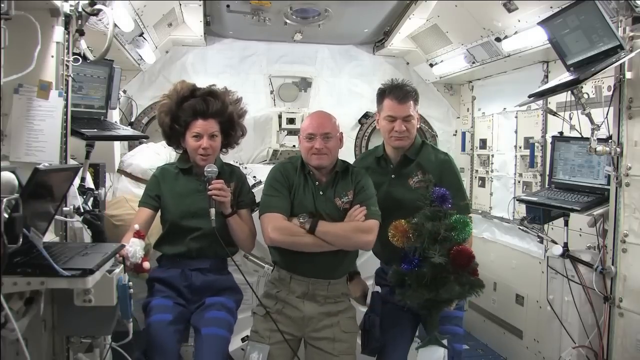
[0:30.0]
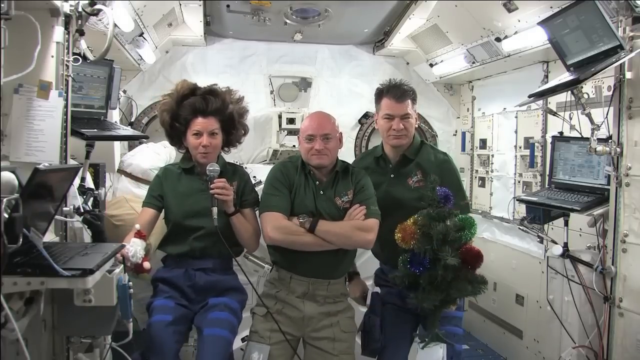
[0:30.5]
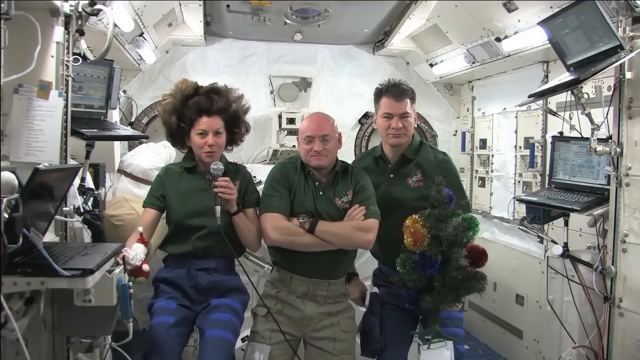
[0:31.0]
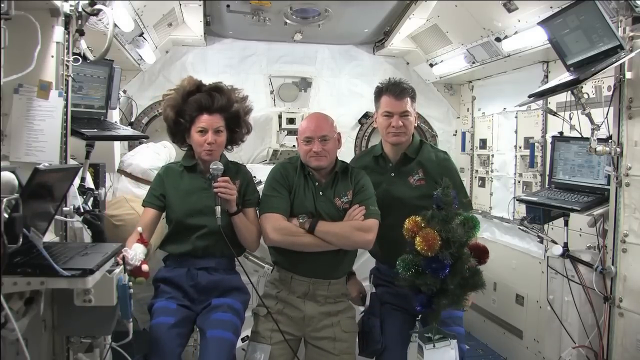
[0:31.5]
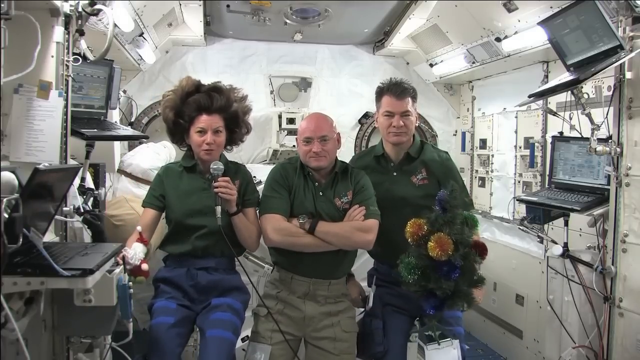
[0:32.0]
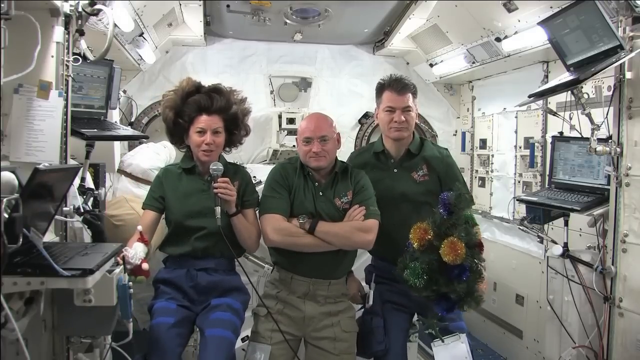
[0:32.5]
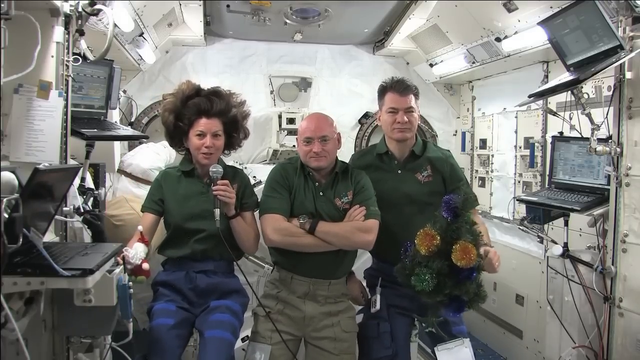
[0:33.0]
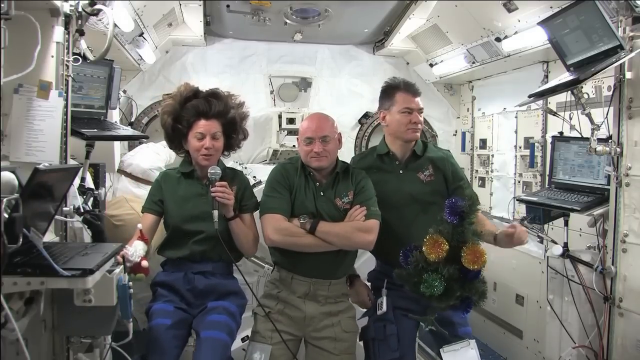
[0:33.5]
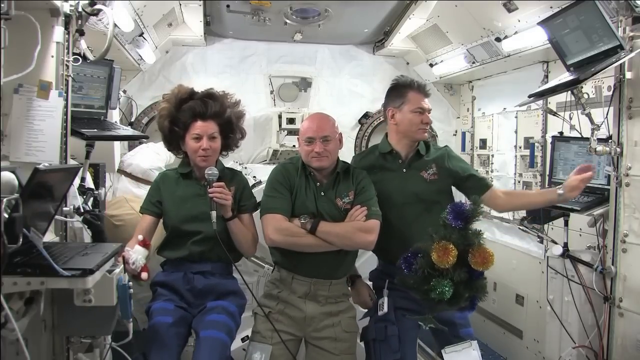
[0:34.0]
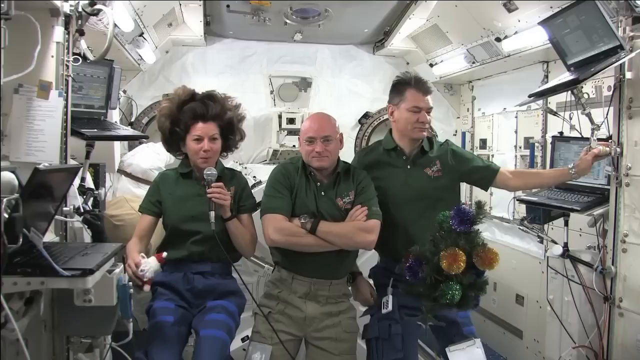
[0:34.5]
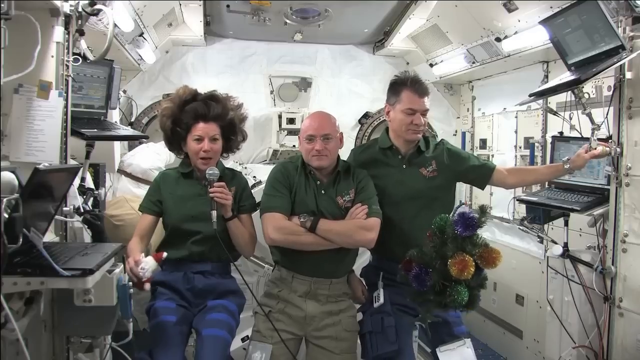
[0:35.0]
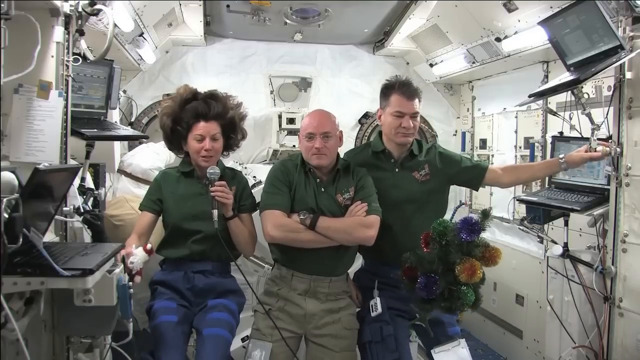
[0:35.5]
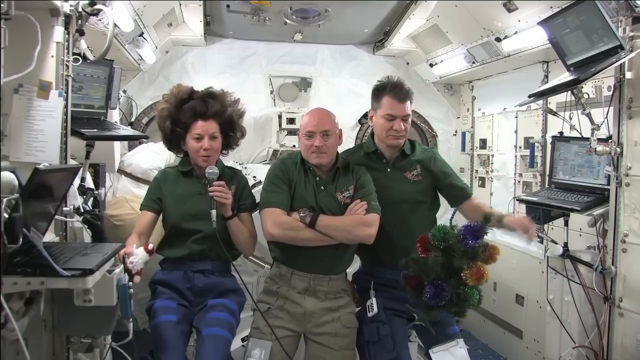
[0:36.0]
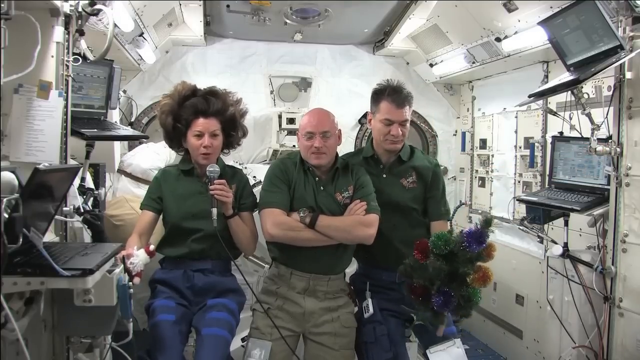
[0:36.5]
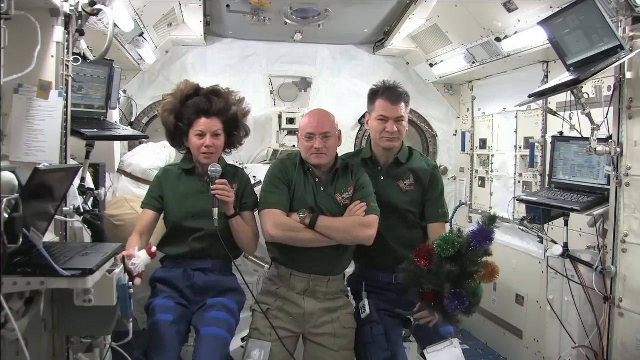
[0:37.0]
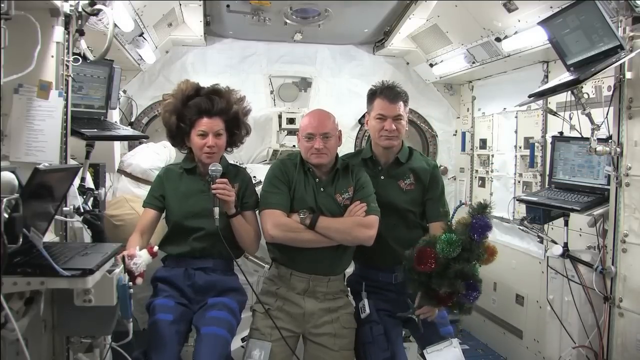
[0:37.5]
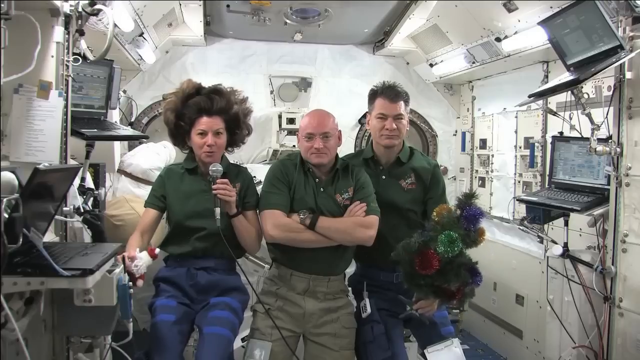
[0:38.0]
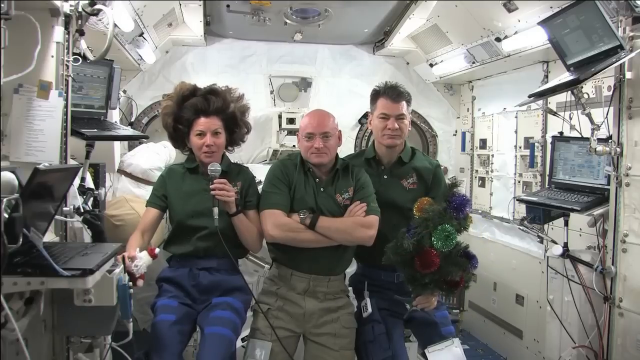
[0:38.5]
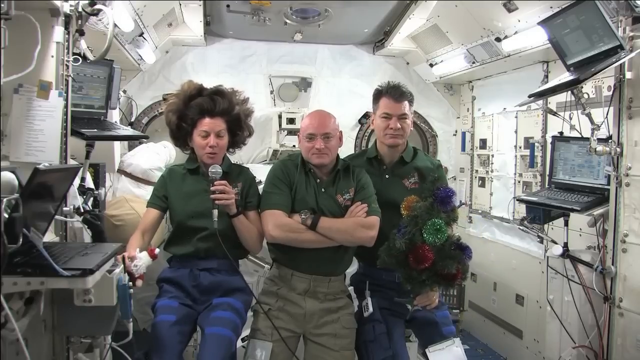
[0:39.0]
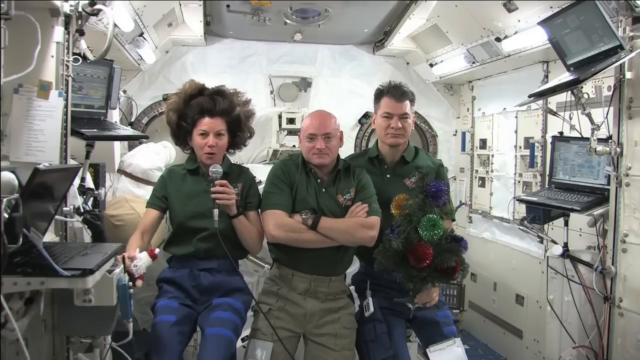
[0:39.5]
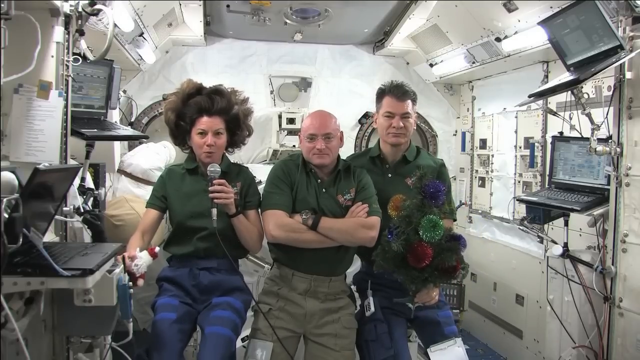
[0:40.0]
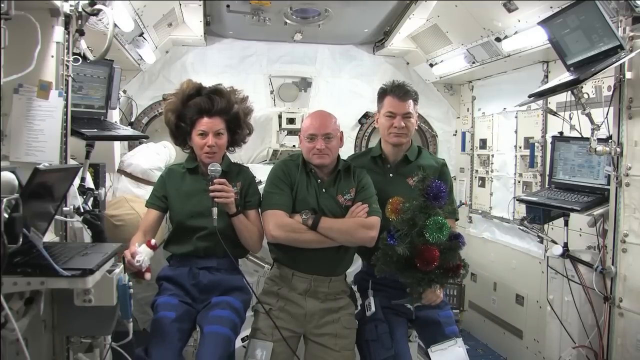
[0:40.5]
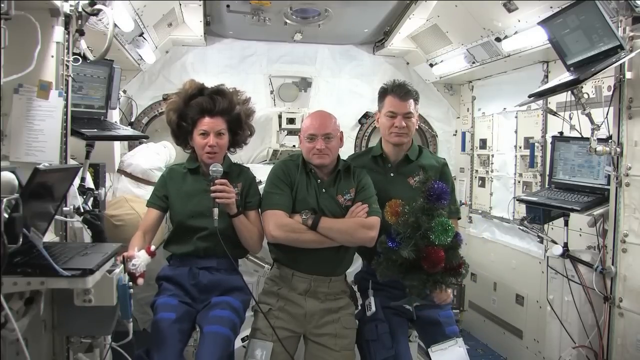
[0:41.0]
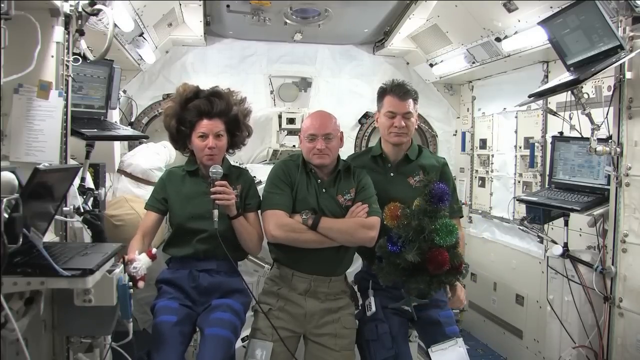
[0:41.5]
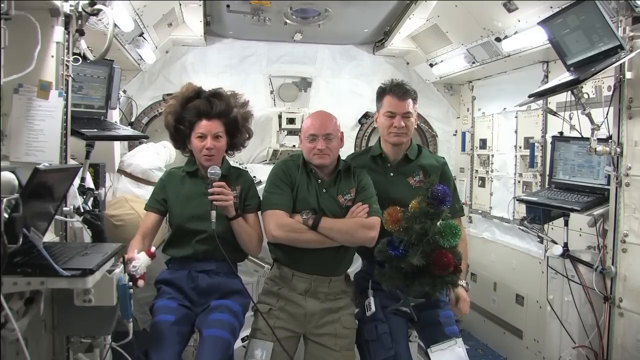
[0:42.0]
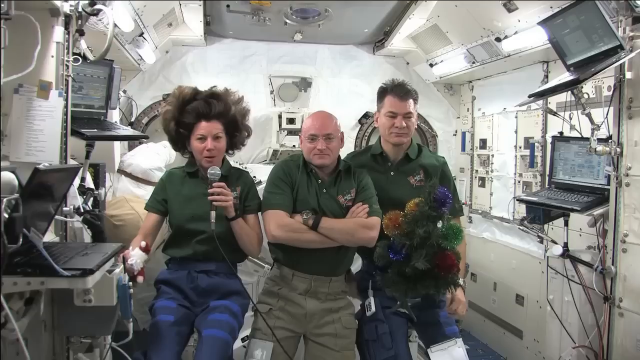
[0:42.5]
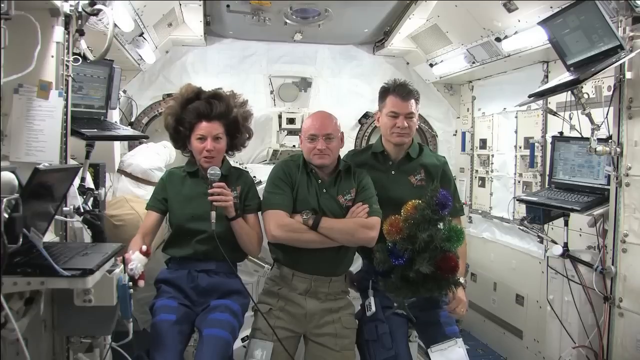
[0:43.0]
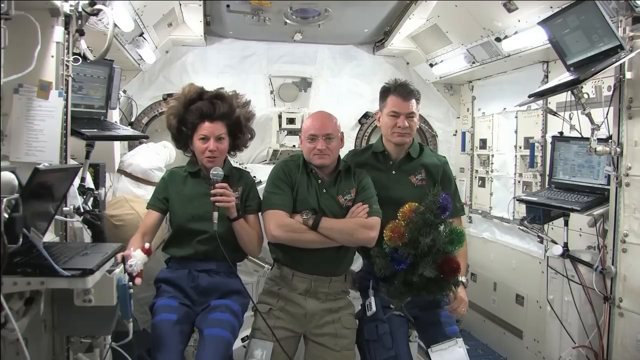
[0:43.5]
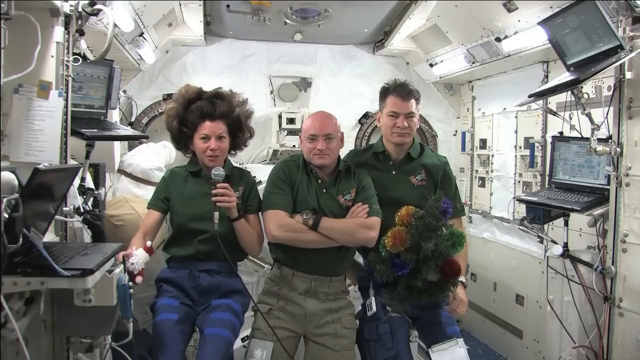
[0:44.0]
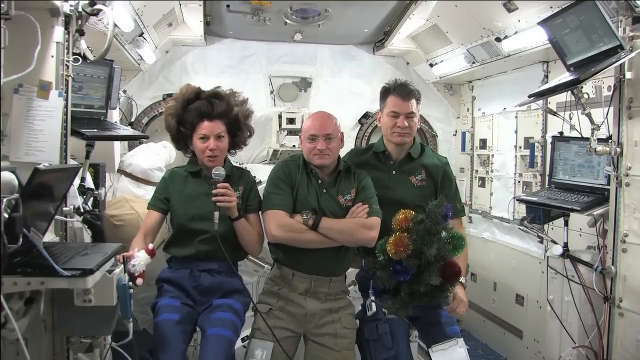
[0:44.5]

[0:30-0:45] Three astronauts float in zero gravity, appearing to send a holiday-themed message back to Earth. Numerous pieces of equipment and computer terminals are behind them. All three are dressed similarly in dark green collared short-sleeved polo shirts with an insignia on the right side; it is unclear what the insignia says. The woman wears dark blue pants, the man in the middle wears khaki pants, and the man on the right wears dark blue pants as well. The woman's hair floats around her head in the zero gravity, and she holds a microphone in her left hand and a small Santa Claus doll in her right hand. The bald man in the middle looks at the camera, smiling, with his arms crossed over his chest. The man on the far right looks down at a small artificial Christmas tree floating in zero gravity; it has areas of metallic gold and purple as well as green.